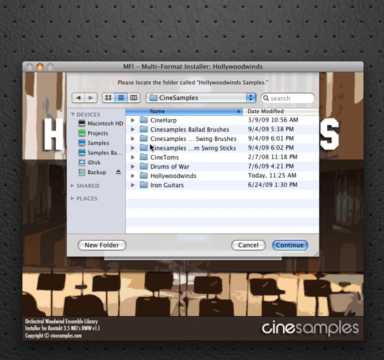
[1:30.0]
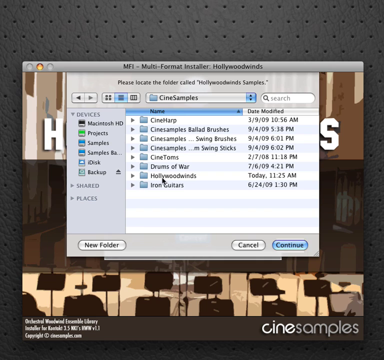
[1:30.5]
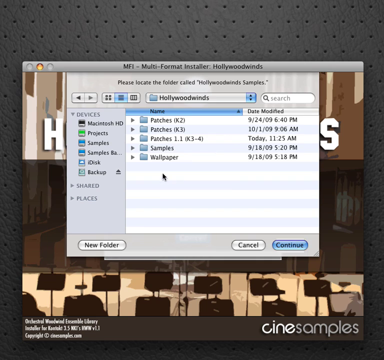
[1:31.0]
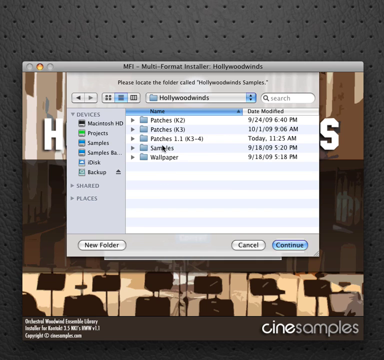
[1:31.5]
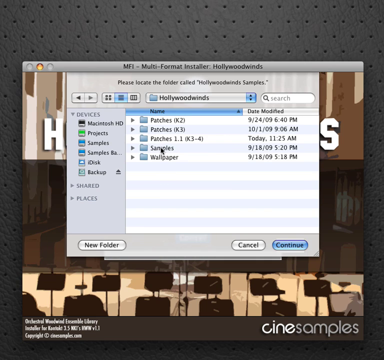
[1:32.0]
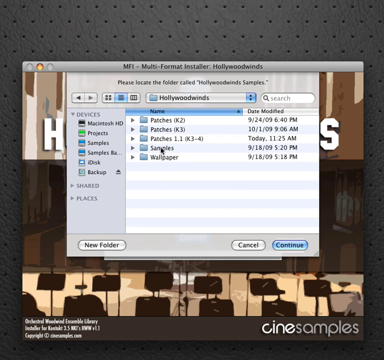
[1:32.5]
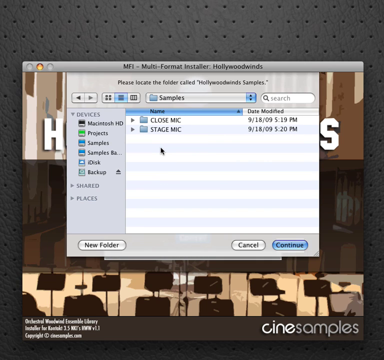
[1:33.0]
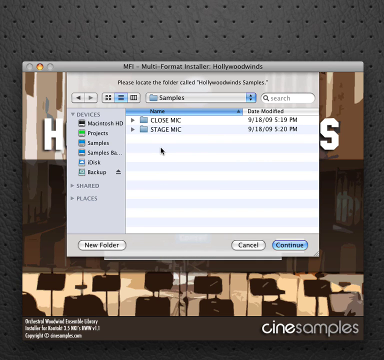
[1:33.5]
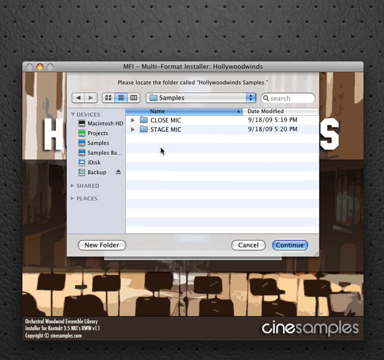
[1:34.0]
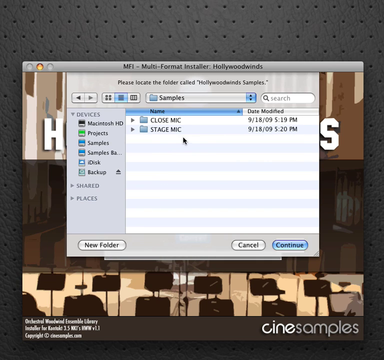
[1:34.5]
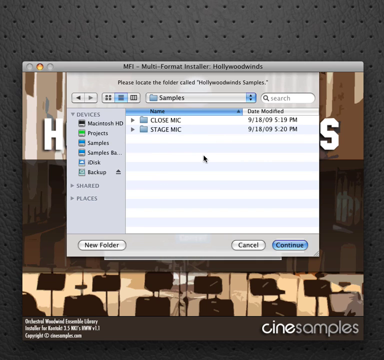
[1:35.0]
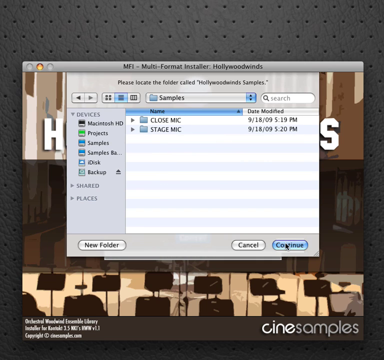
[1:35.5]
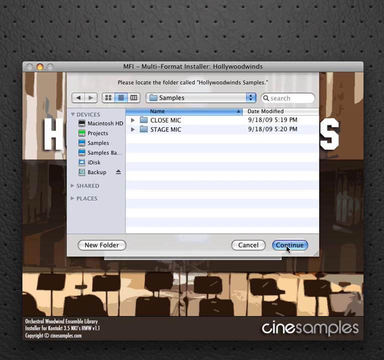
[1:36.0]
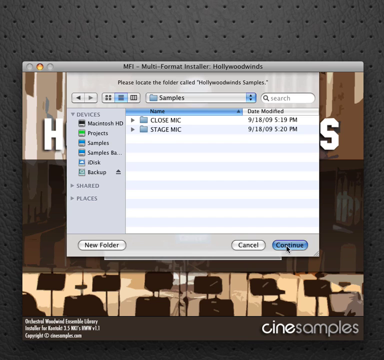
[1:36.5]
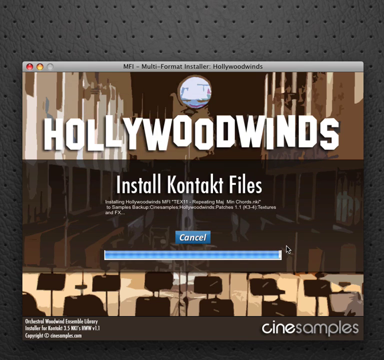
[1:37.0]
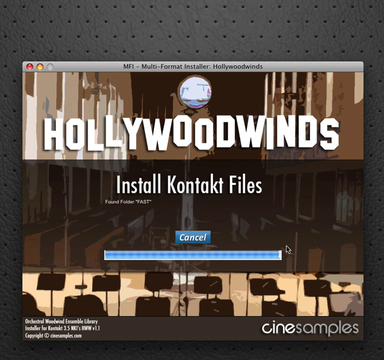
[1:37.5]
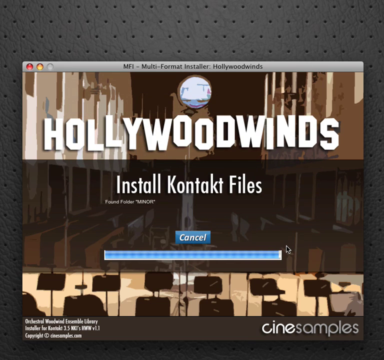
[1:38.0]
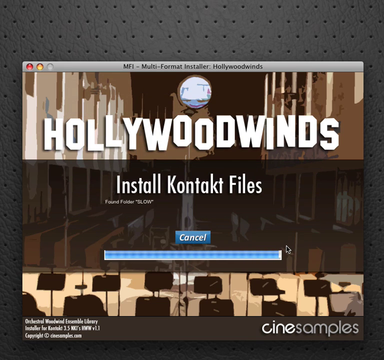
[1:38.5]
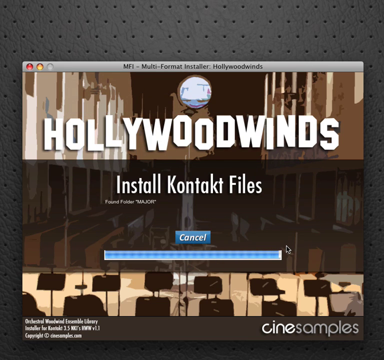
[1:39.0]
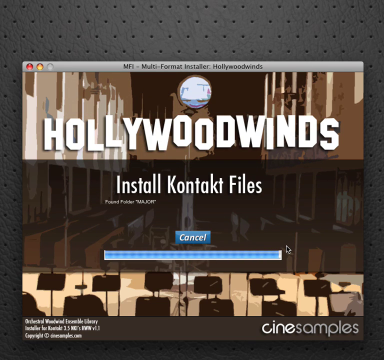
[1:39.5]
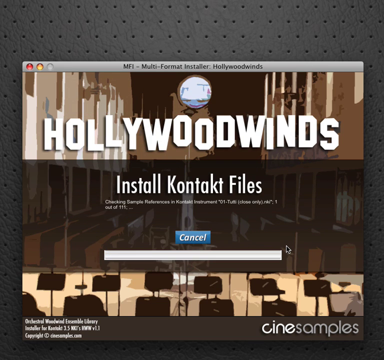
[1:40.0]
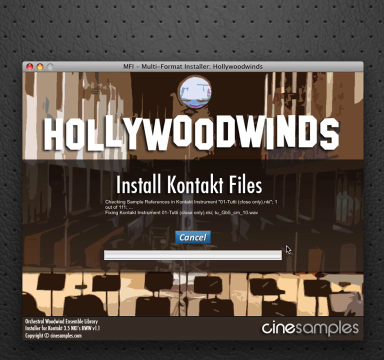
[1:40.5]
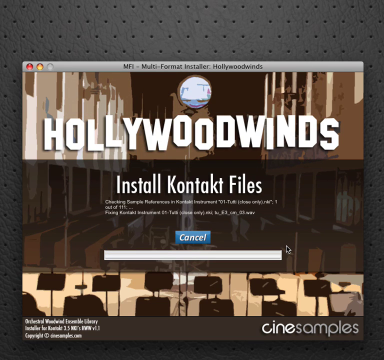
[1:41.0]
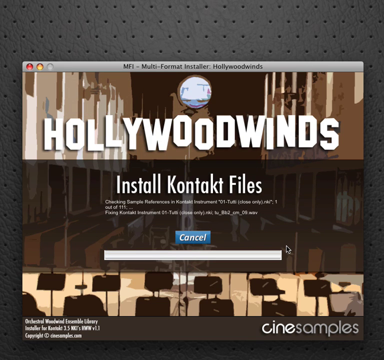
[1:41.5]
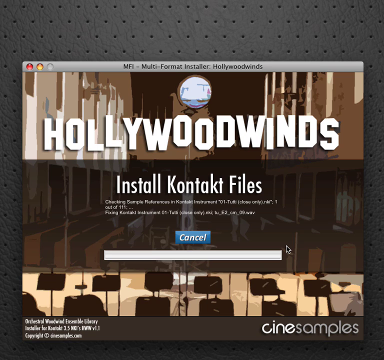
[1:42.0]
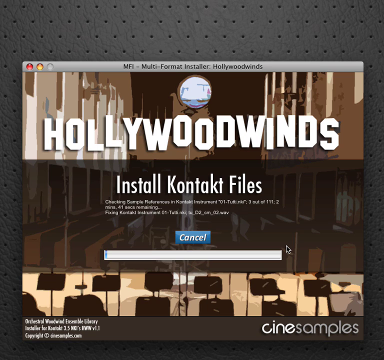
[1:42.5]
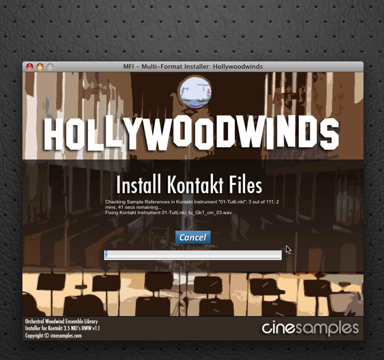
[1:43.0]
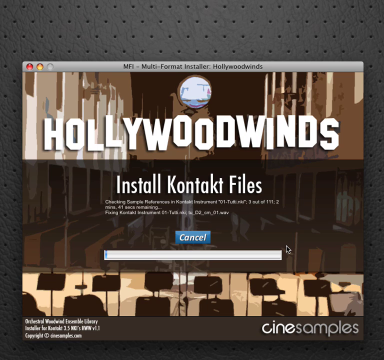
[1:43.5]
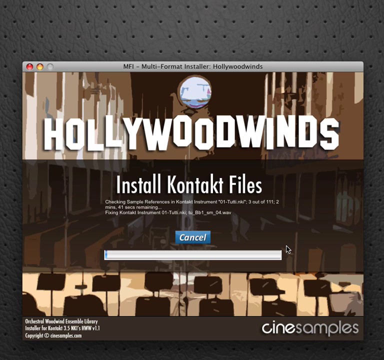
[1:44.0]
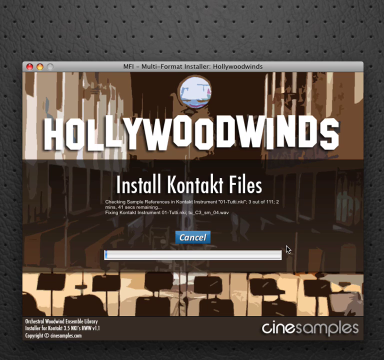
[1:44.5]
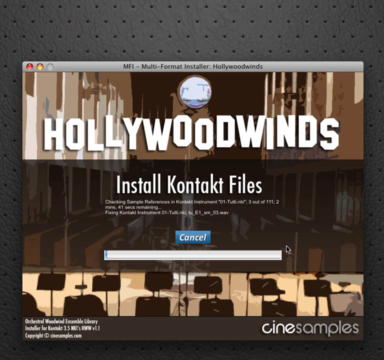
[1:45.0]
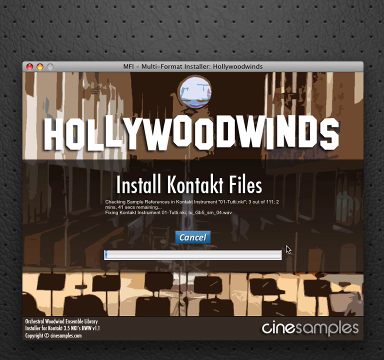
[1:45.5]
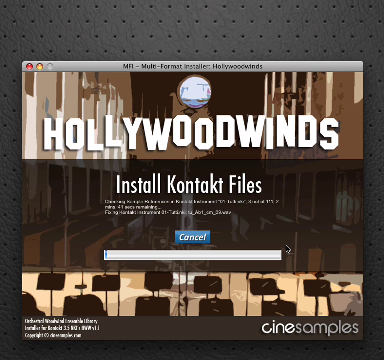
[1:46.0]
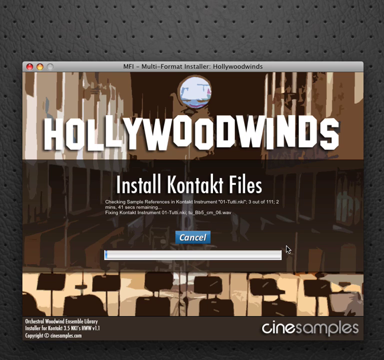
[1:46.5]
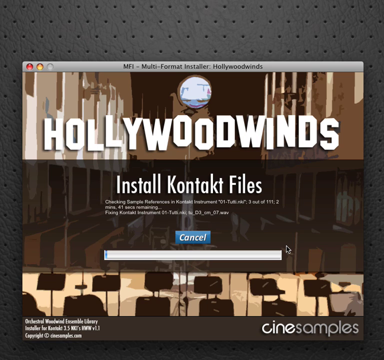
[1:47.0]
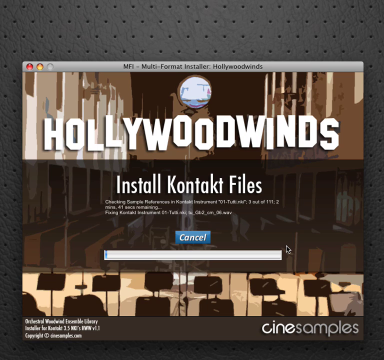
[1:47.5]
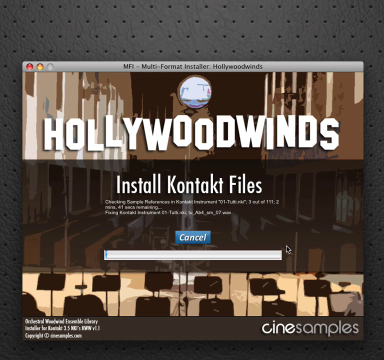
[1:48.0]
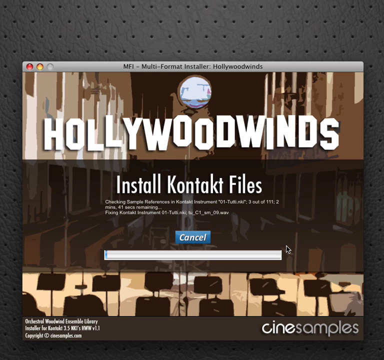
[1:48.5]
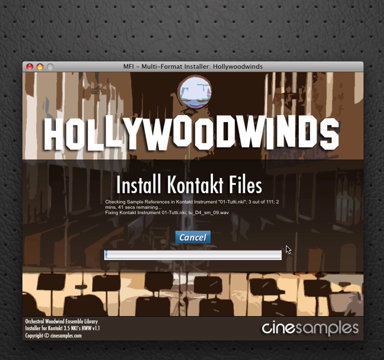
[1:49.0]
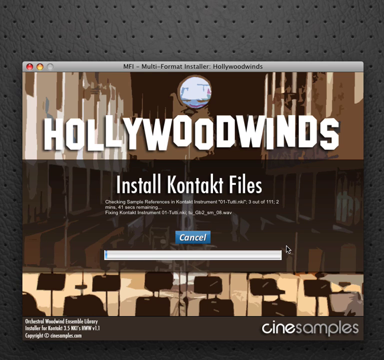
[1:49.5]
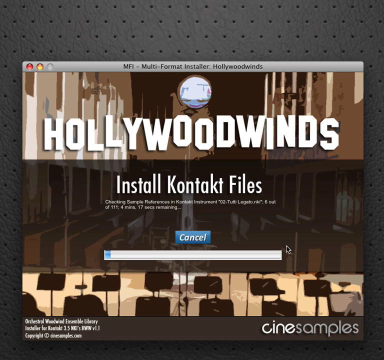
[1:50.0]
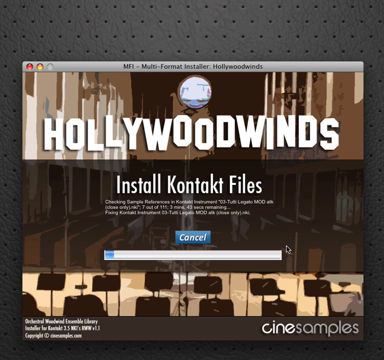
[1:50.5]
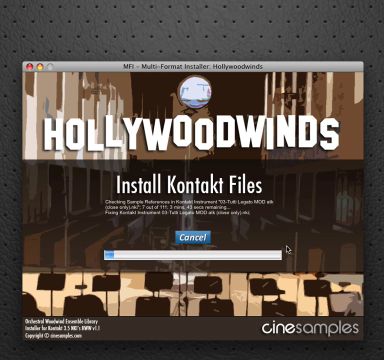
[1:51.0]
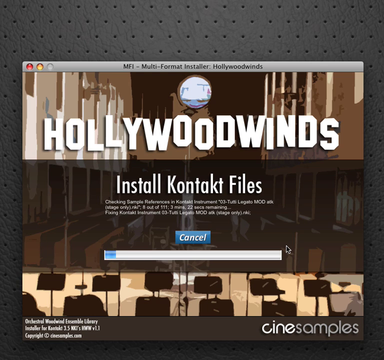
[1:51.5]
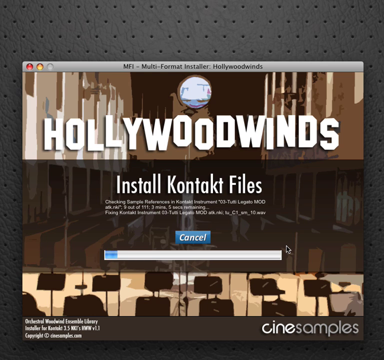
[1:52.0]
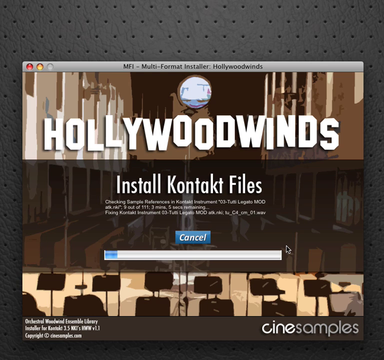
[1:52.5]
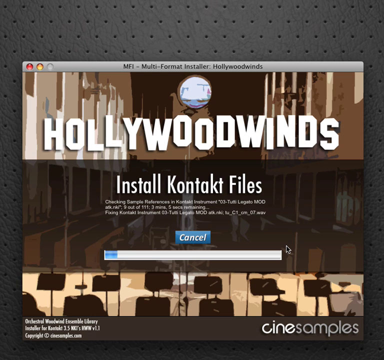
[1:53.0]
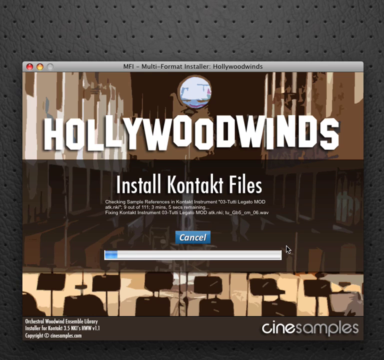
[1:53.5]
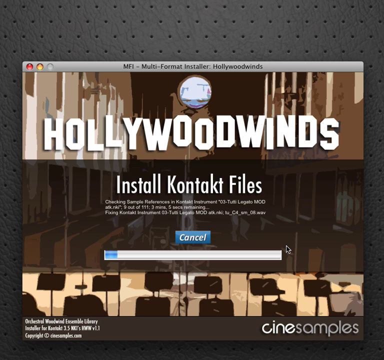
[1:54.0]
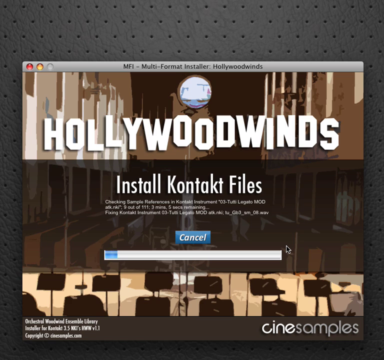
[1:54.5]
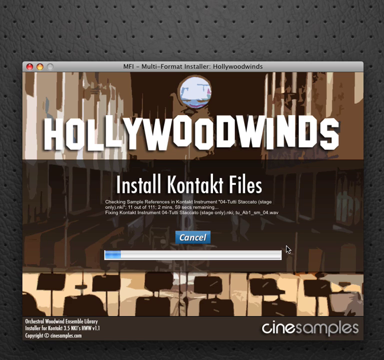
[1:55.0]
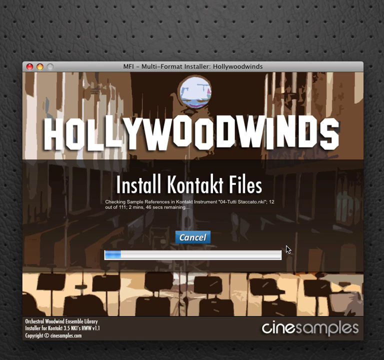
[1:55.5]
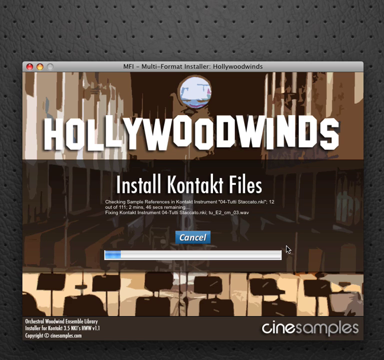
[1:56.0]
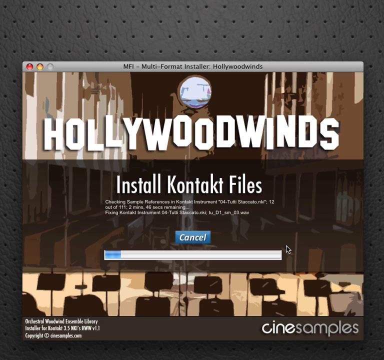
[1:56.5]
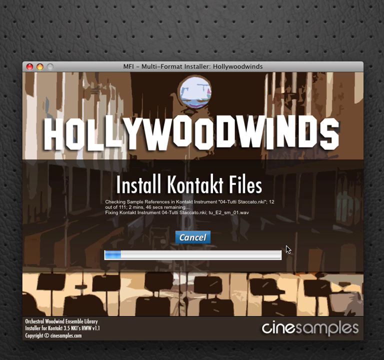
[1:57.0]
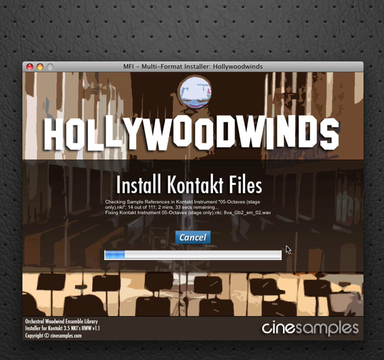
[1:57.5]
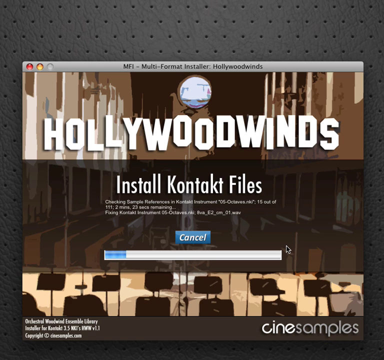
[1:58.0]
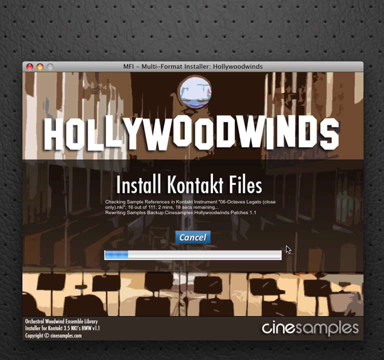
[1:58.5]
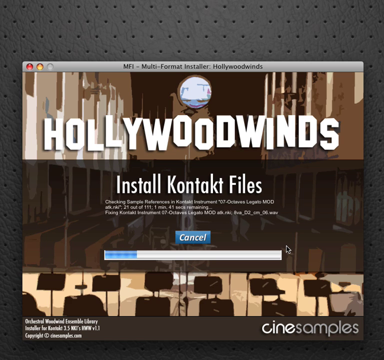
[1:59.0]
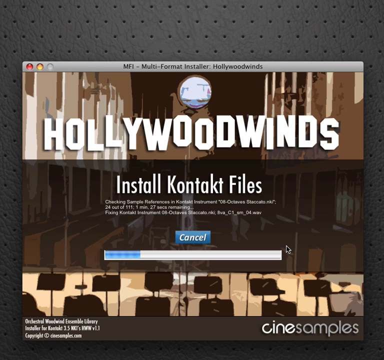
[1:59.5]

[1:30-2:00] The drop-down list of eight files is shown, including Signed Harp, Cine Samples, Swing Brushes, swing sticks, signed toms, drums of war, hollywood winds and iron guitars. The cursor hovers over hollywood winds and clicks on it, and another menu comes up showing five files: patches K2, patches K3, patches 1.1, samples and wallpaper. The cursor goes over samples, which brings up two new files called close MIC and stage MIC; the cursor moves over them and presses continue. A blue bar at the bottom under the cancel link shows something processing, and while the files are being checked, the program runs through them, listing files and folders.